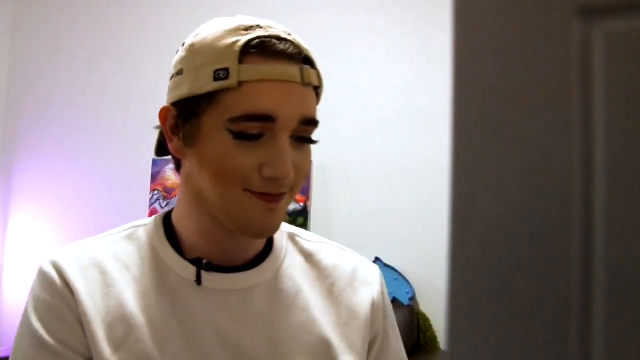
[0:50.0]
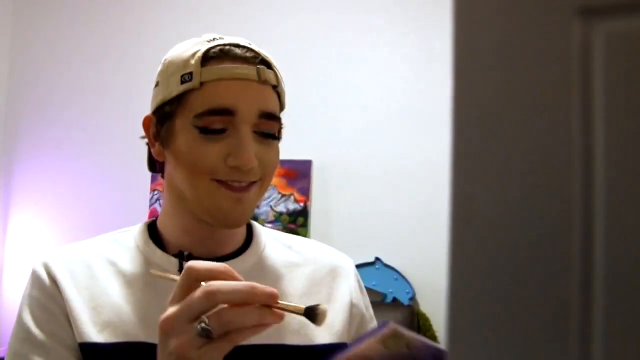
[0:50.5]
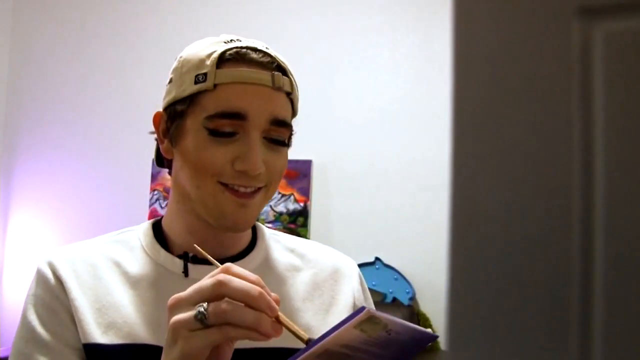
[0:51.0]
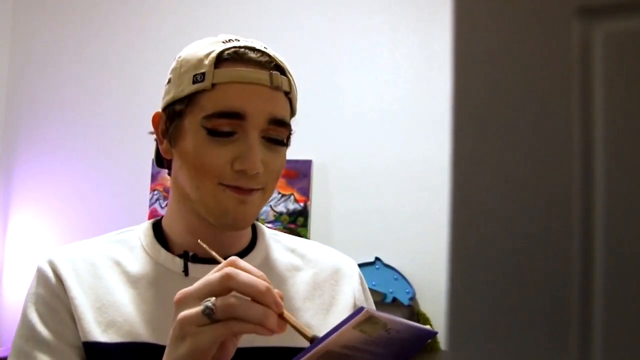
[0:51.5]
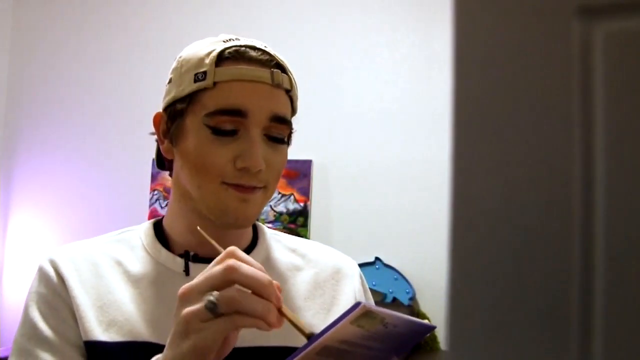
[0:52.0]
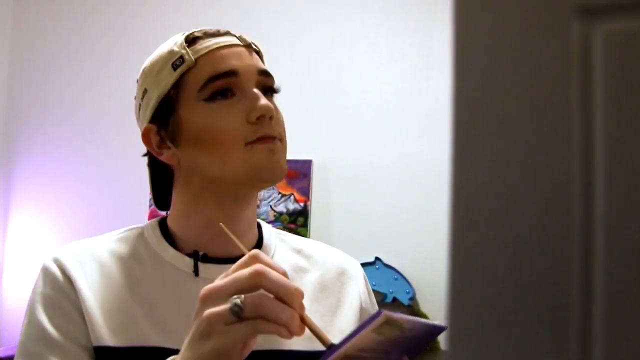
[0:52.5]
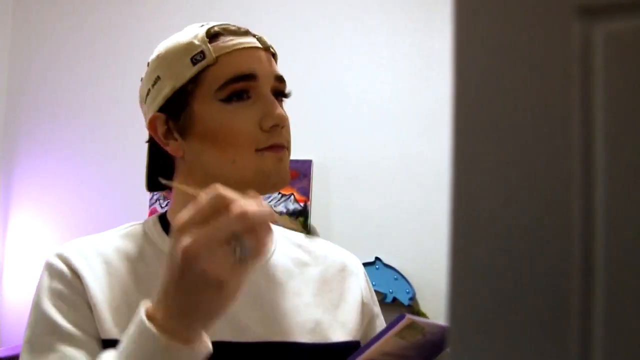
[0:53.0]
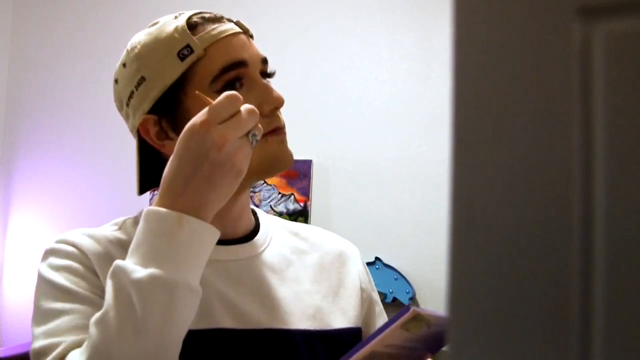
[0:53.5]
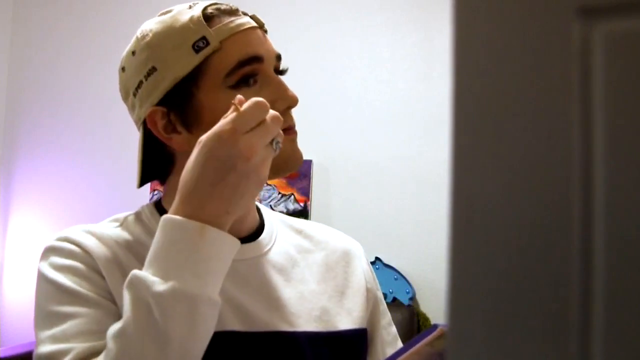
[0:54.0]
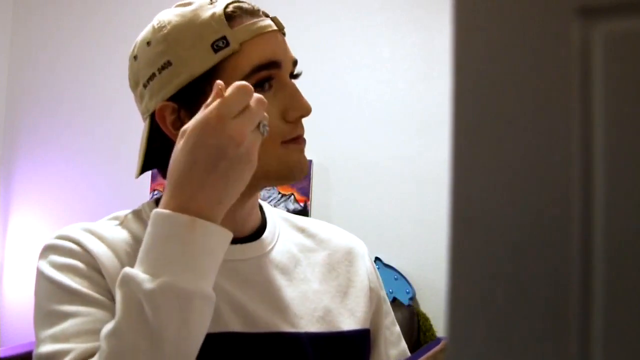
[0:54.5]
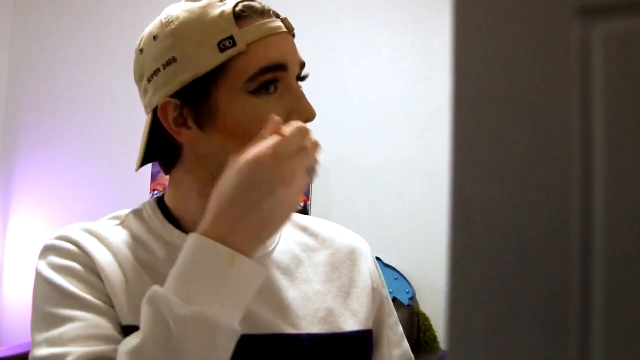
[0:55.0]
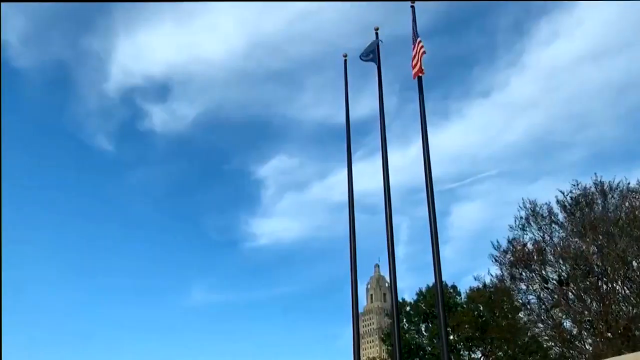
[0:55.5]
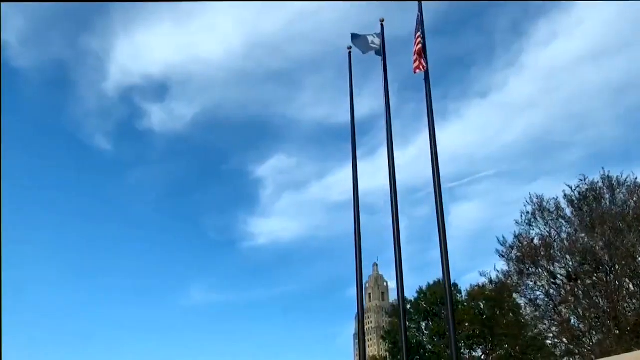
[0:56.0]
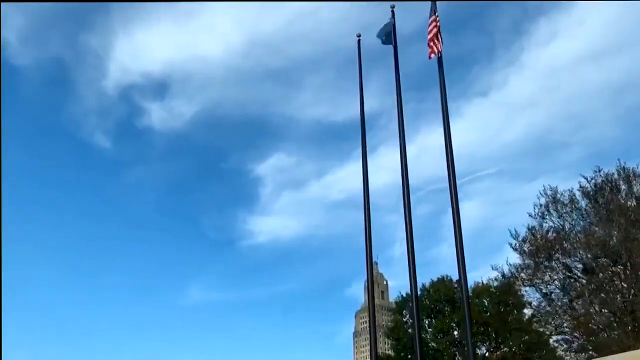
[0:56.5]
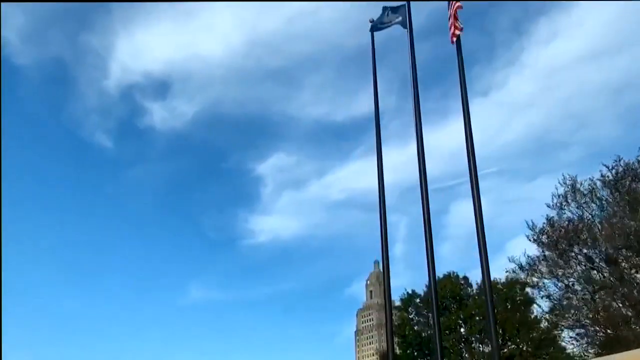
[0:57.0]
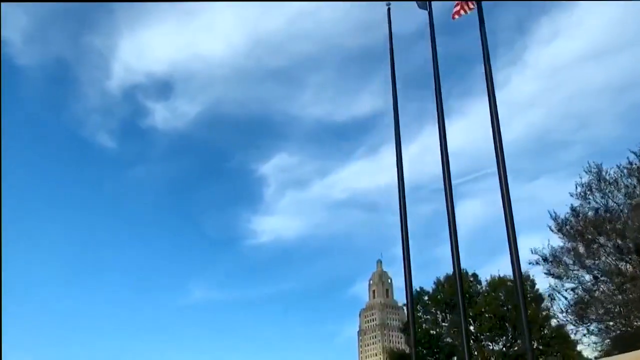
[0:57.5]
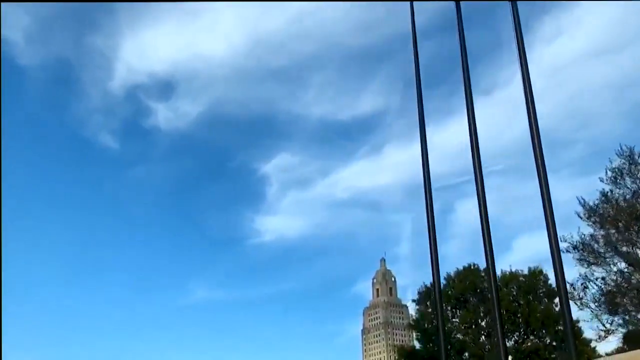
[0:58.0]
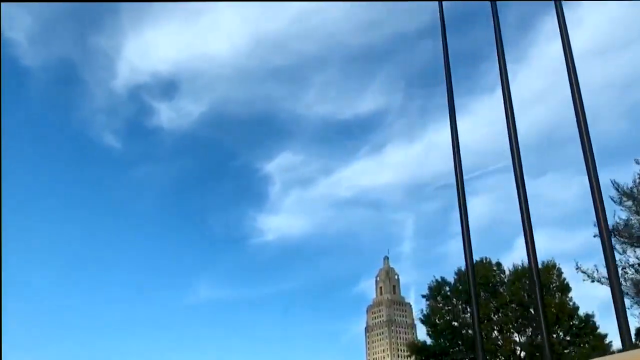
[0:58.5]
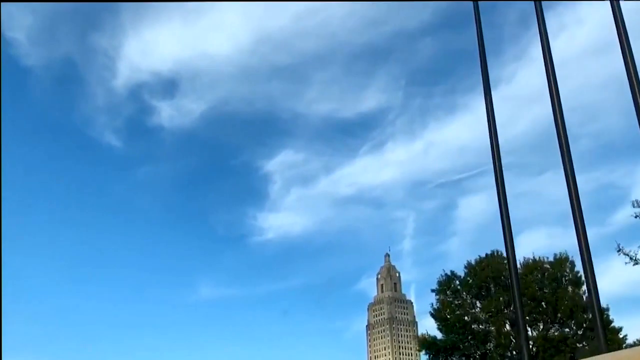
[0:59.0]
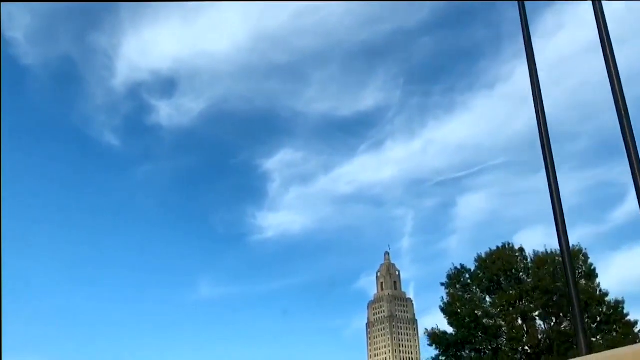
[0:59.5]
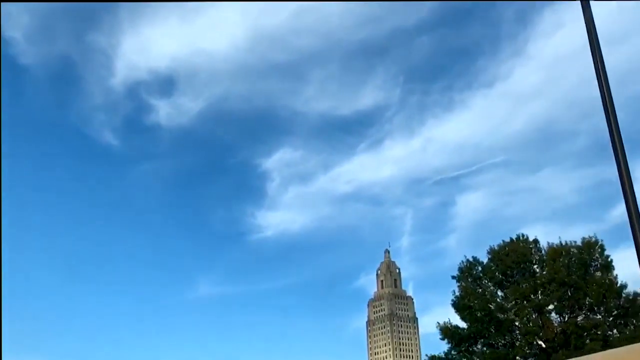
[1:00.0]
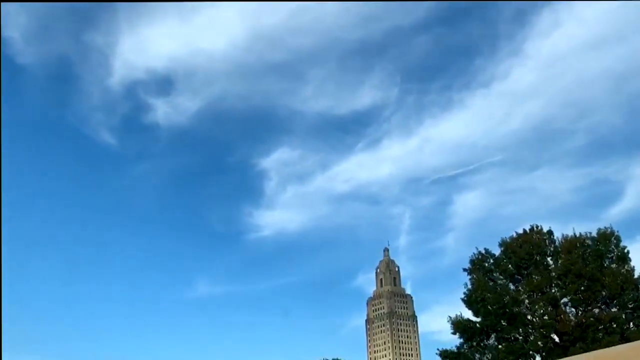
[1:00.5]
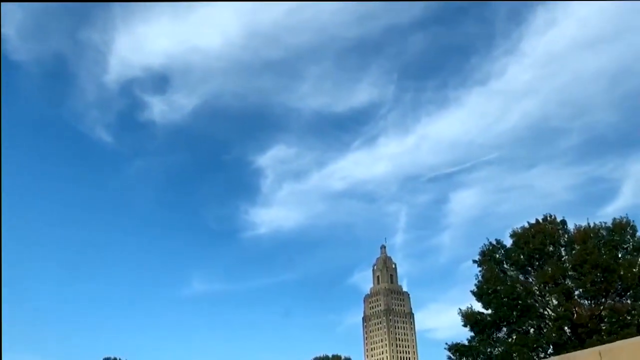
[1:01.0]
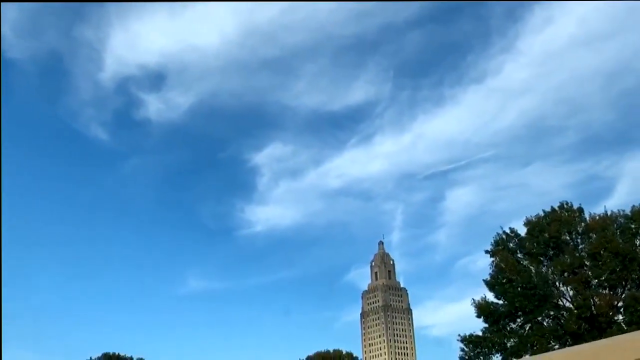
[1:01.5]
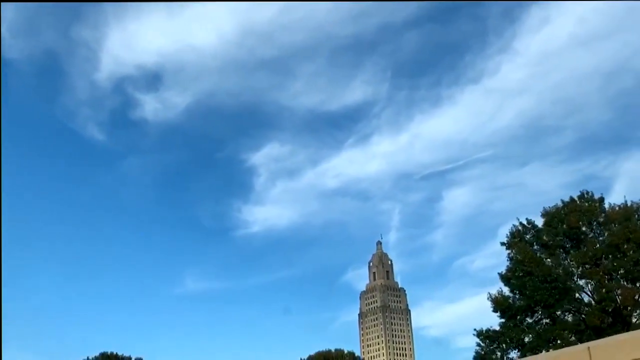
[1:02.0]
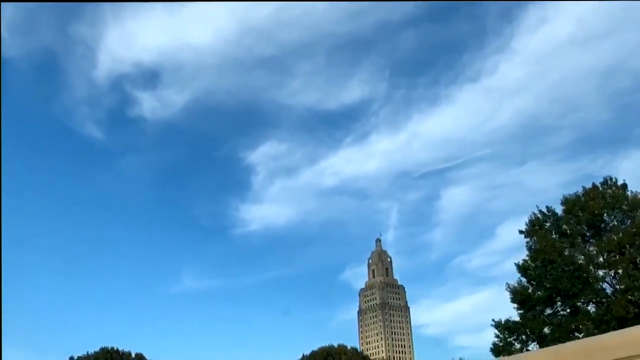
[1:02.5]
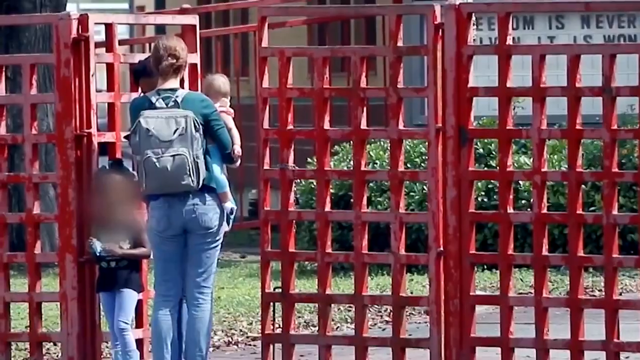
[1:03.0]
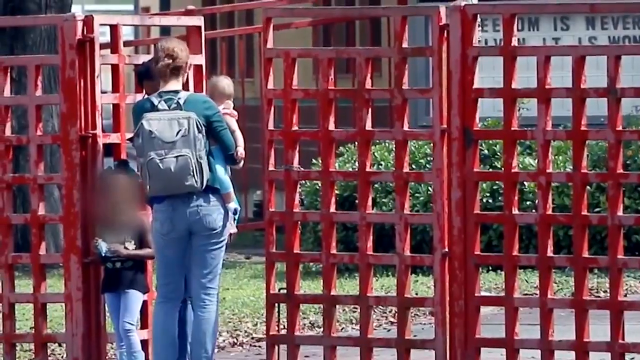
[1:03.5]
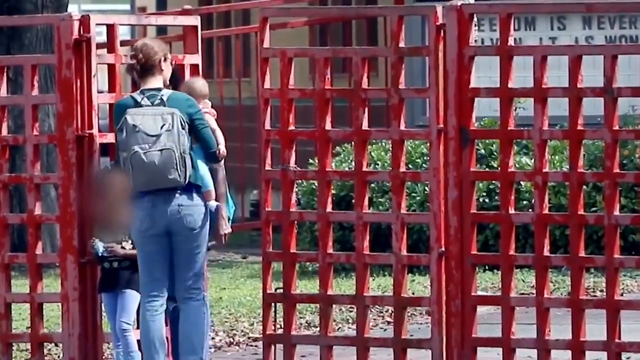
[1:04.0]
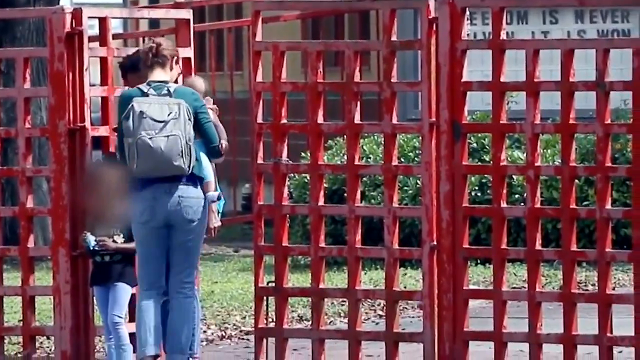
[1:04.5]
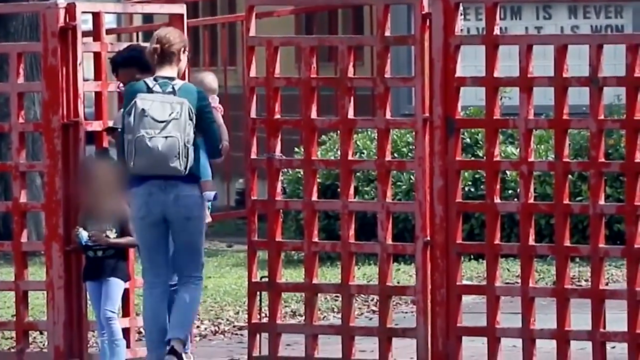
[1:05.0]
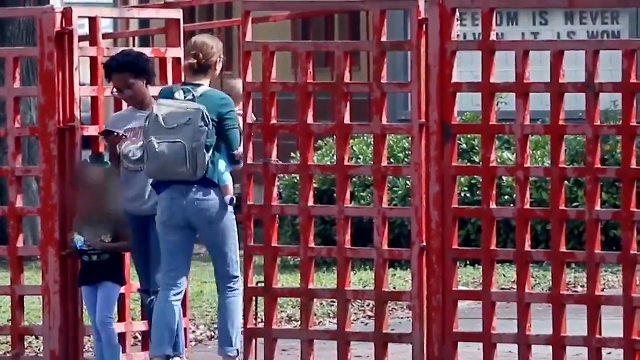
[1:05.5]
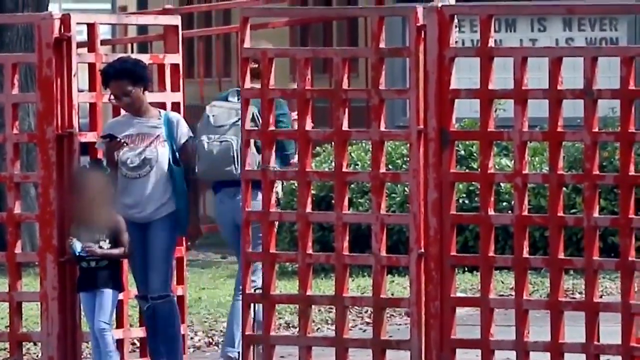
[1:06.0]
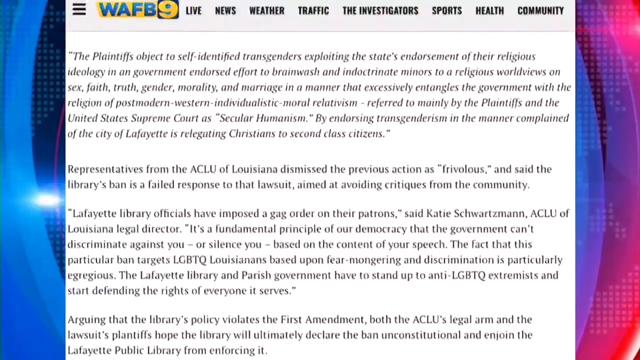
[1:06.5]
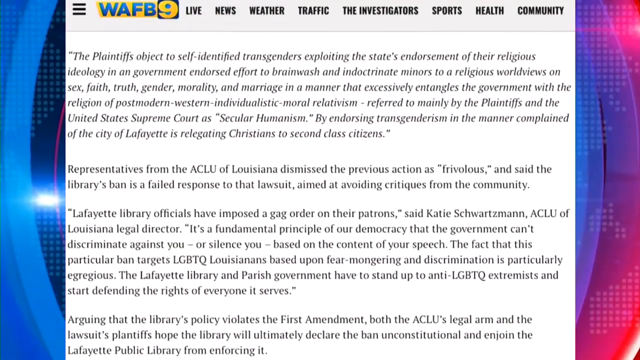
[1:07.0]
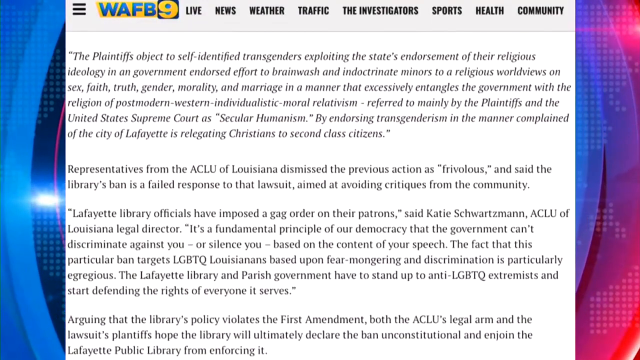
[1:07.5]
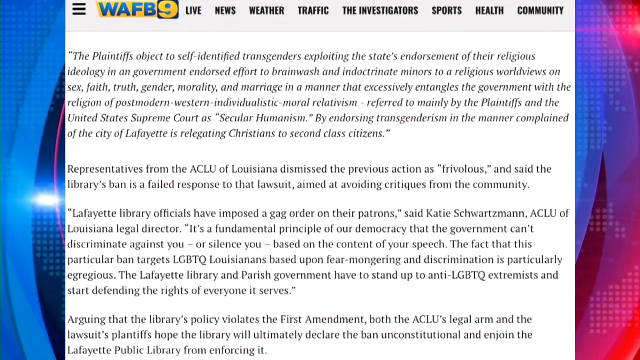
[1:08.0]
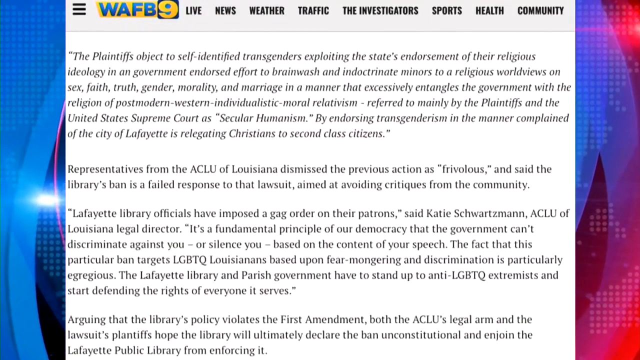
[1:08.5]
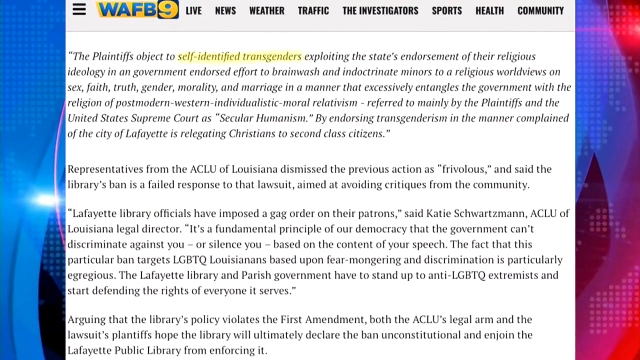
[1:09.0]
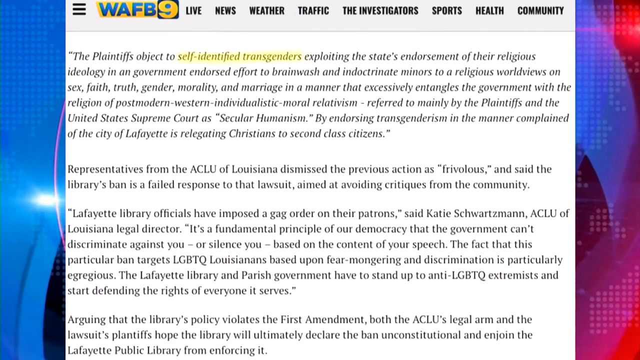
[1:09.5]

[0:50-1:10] The person picks up a makeup palette, swirls a brush held in their right hand in it, and puts some of the makeup onto their right cheek, angling their face to see it in the mirror in front of them. The scene moves outside under a very blue sky with some wispy clouds, the camera moving forward as though driving in a car. An image shows a woman with a rucksack carrying a small child beside some red fences. Another screen follows, which seems to be a document about a legal issue; the word transgender is mentioned in it, along with something about a library.